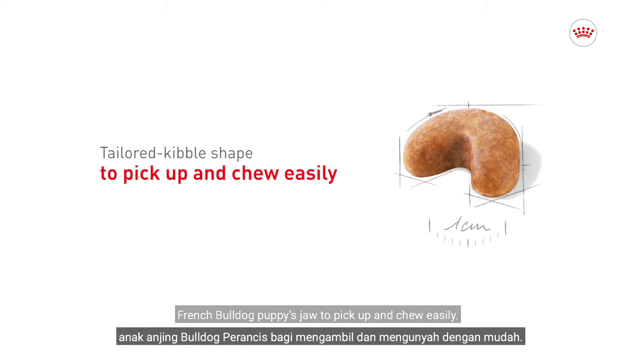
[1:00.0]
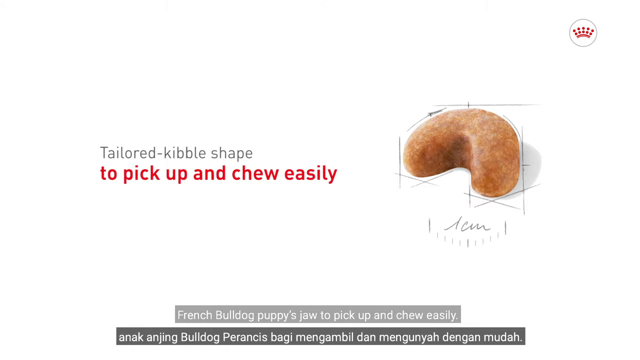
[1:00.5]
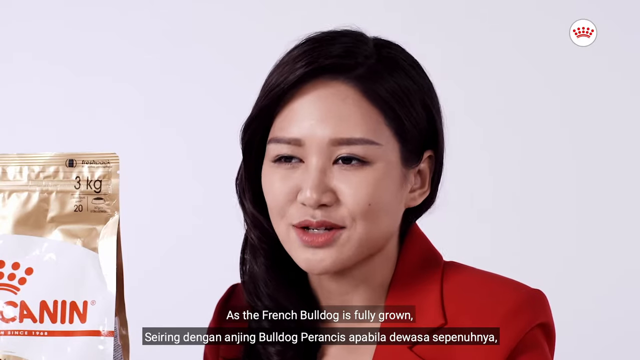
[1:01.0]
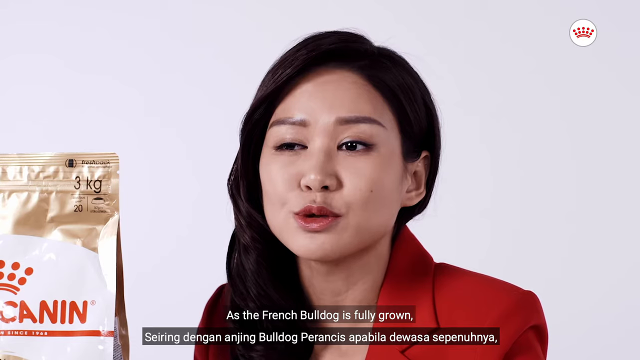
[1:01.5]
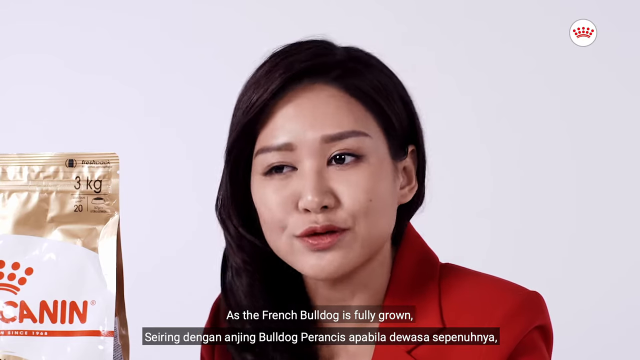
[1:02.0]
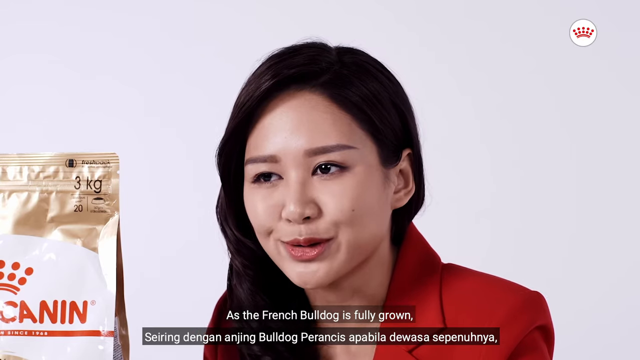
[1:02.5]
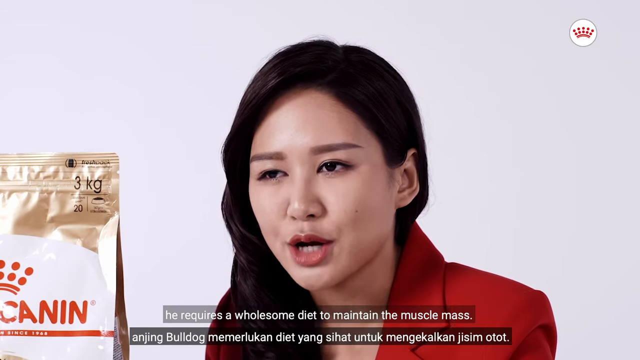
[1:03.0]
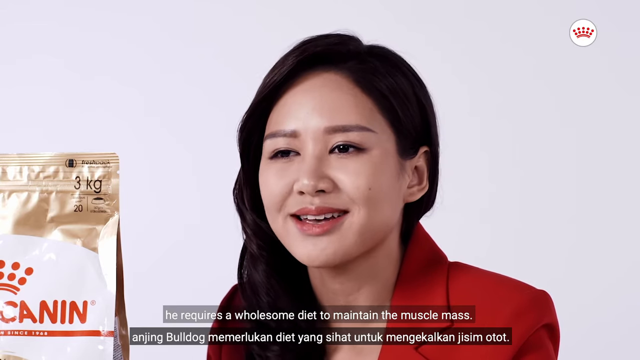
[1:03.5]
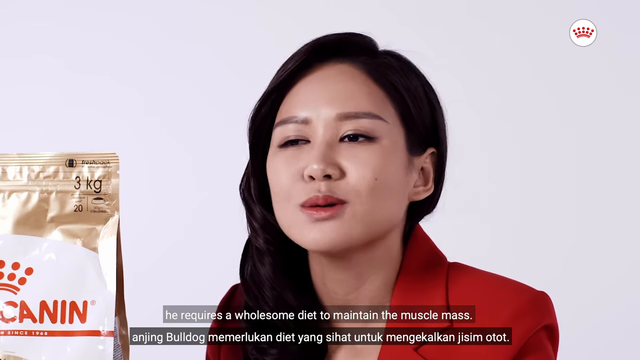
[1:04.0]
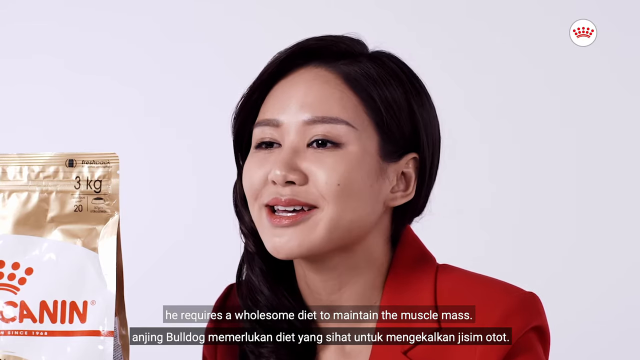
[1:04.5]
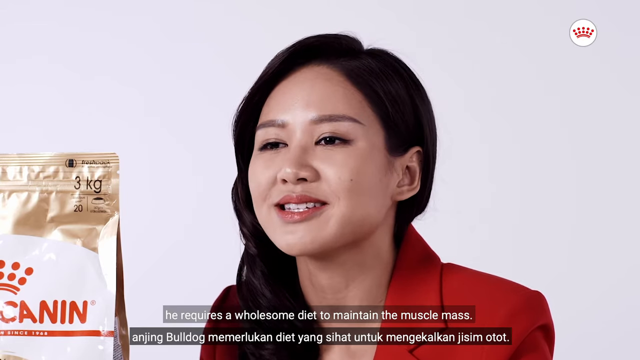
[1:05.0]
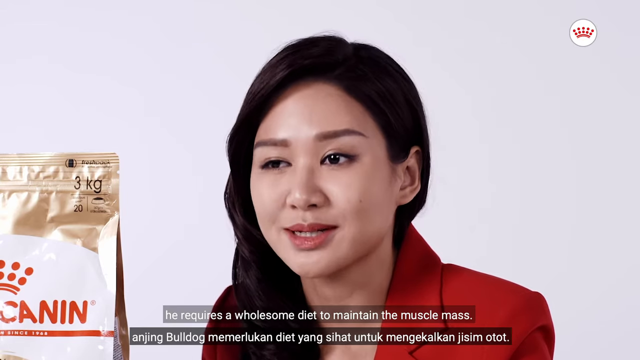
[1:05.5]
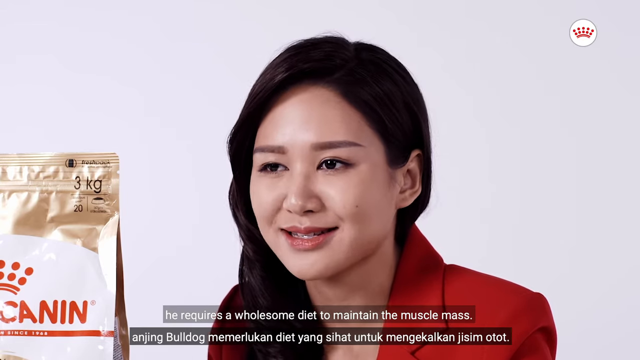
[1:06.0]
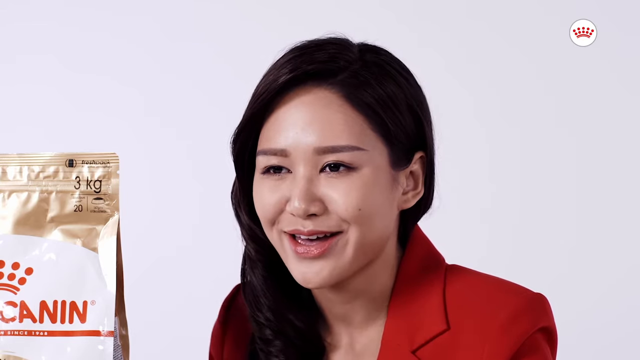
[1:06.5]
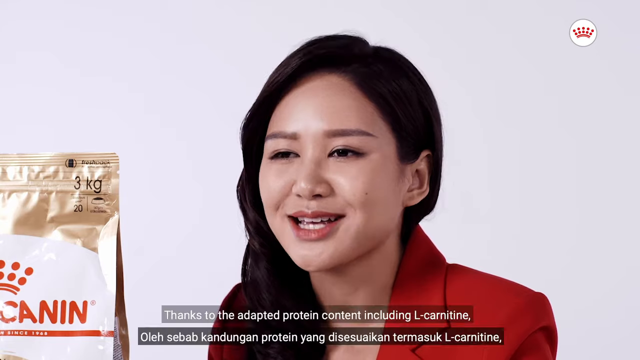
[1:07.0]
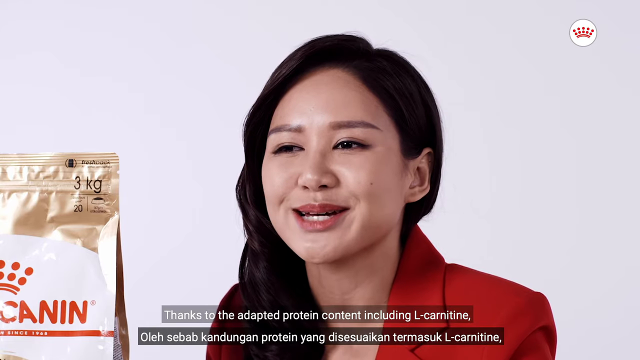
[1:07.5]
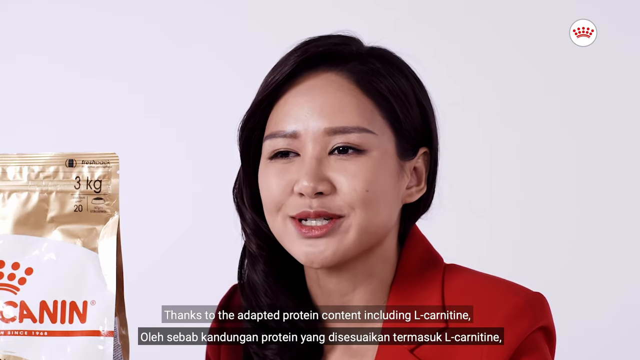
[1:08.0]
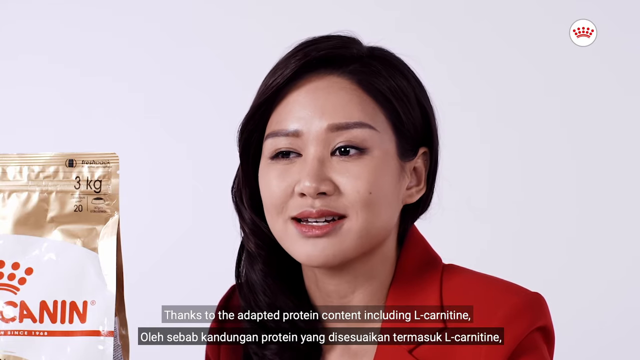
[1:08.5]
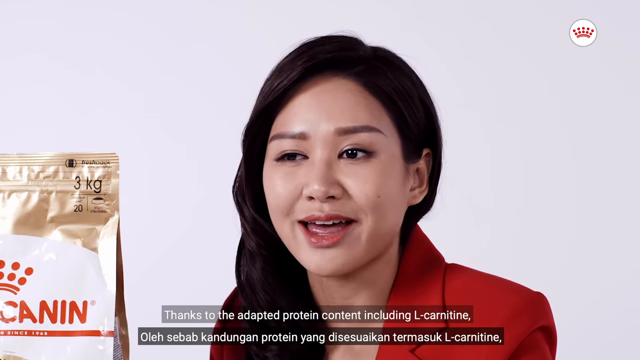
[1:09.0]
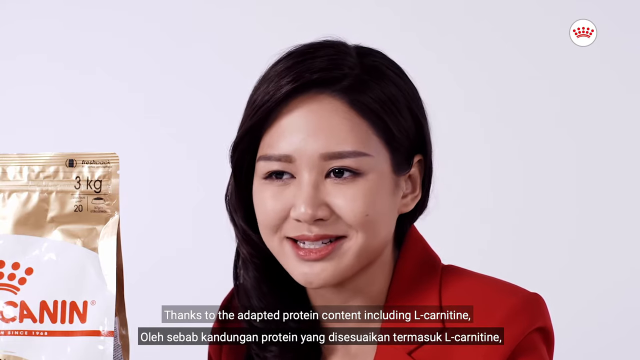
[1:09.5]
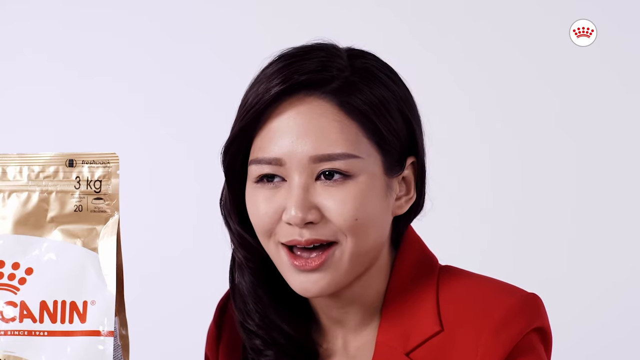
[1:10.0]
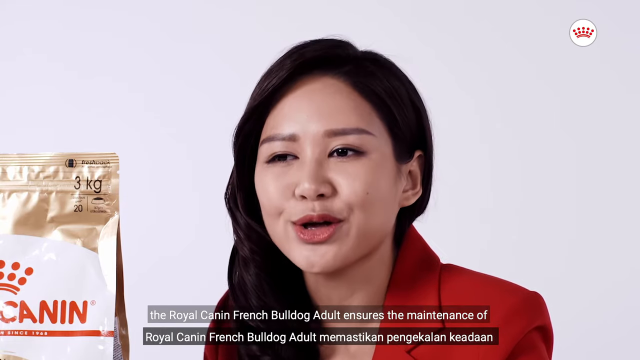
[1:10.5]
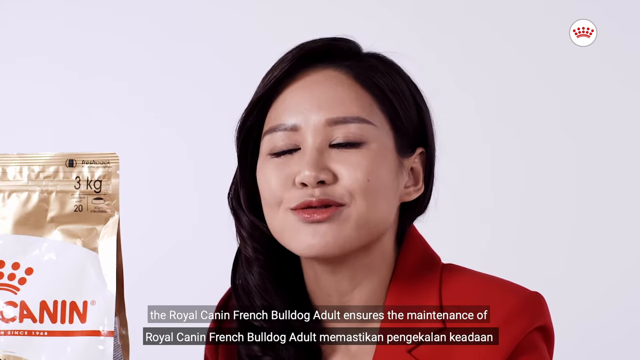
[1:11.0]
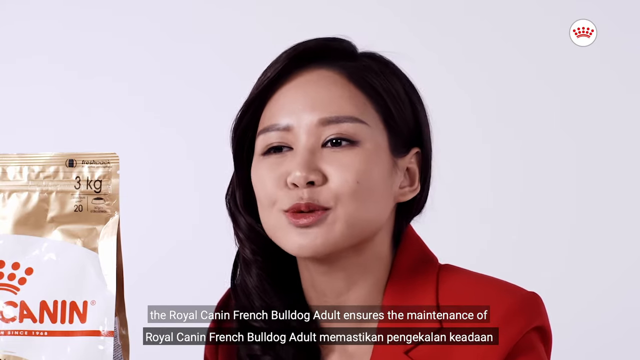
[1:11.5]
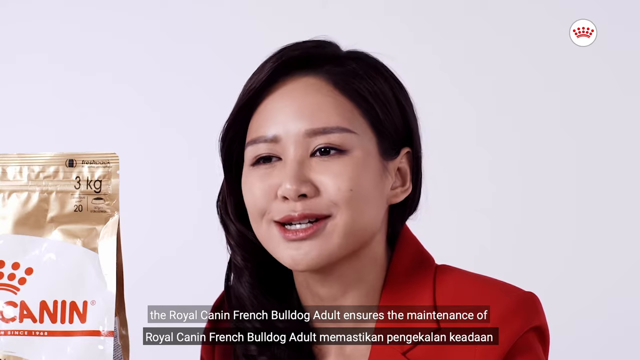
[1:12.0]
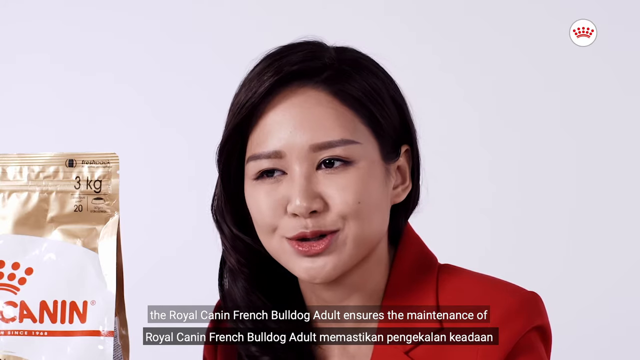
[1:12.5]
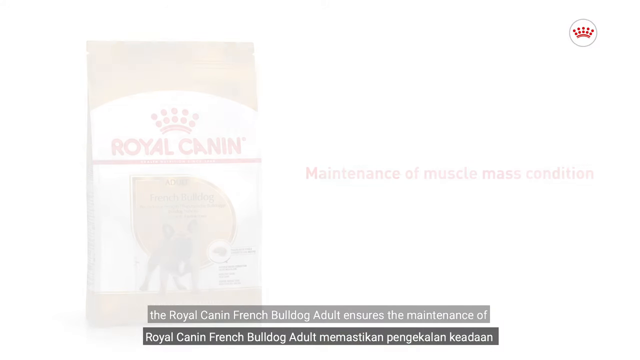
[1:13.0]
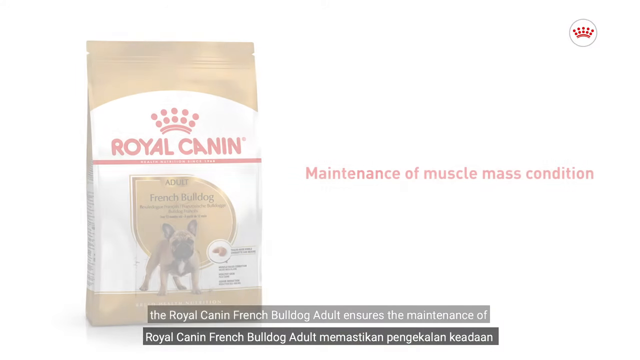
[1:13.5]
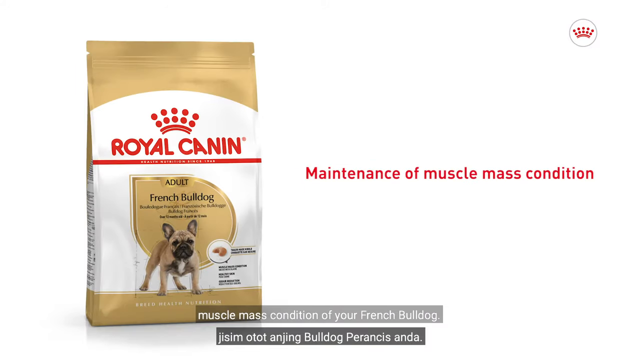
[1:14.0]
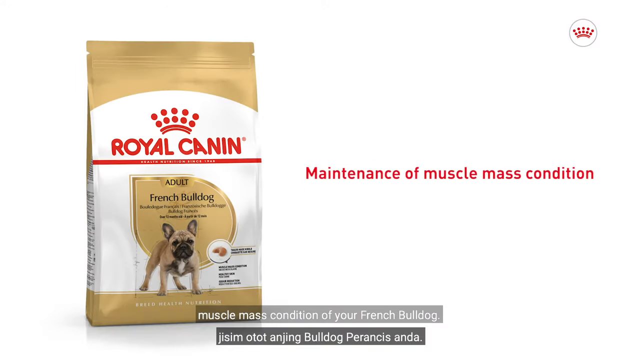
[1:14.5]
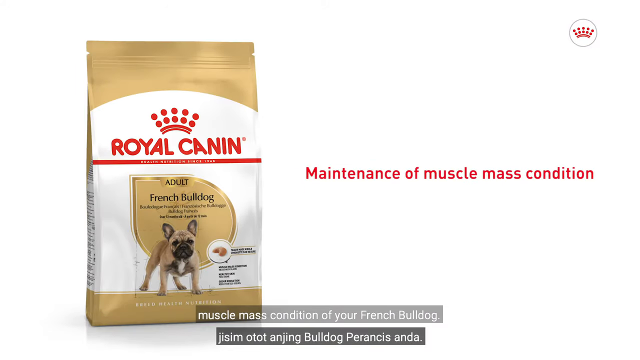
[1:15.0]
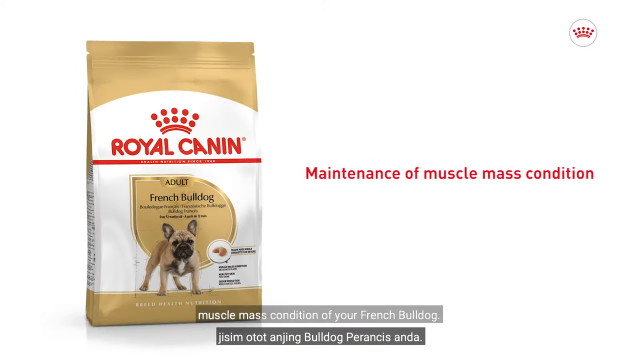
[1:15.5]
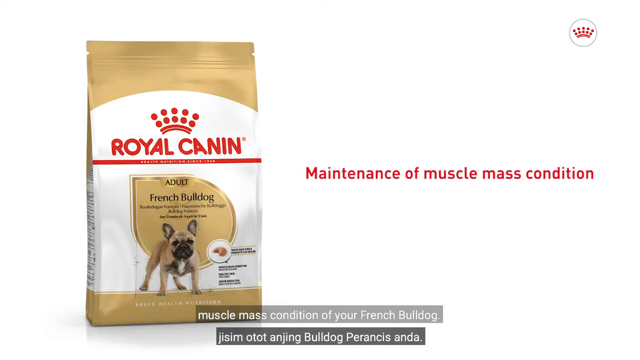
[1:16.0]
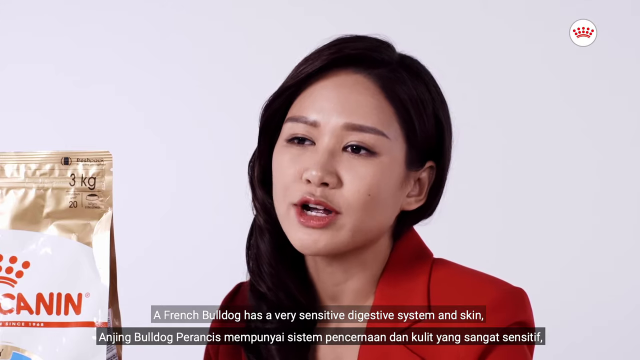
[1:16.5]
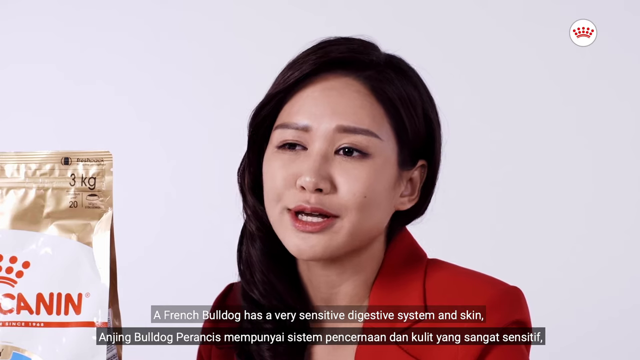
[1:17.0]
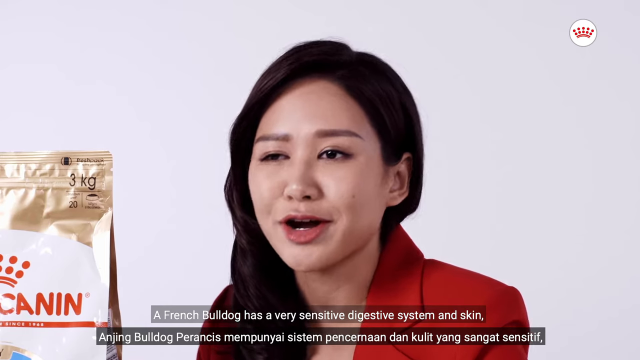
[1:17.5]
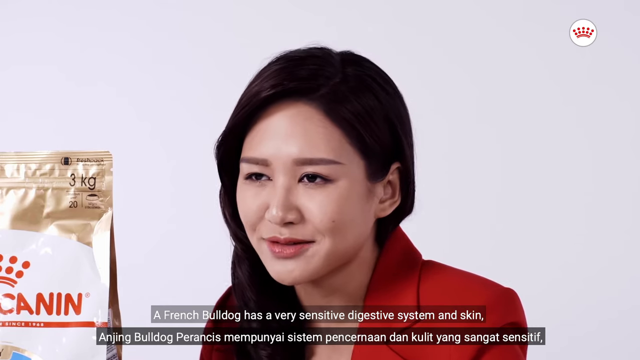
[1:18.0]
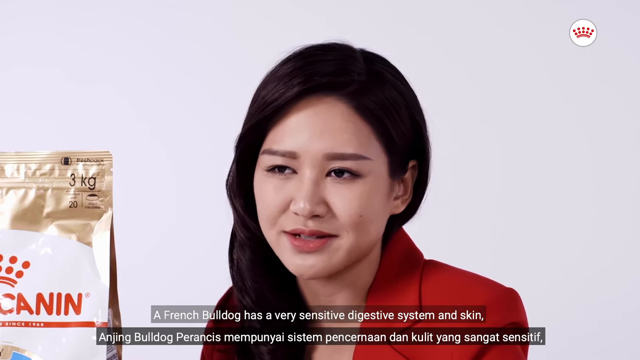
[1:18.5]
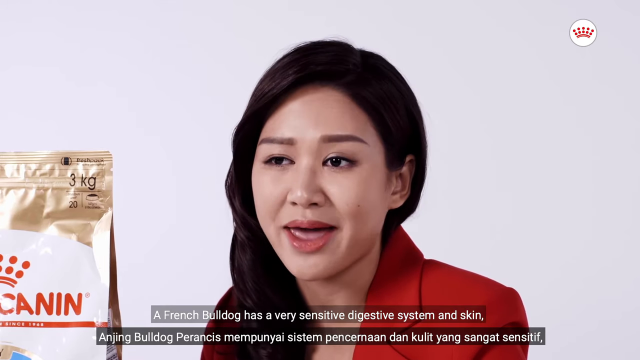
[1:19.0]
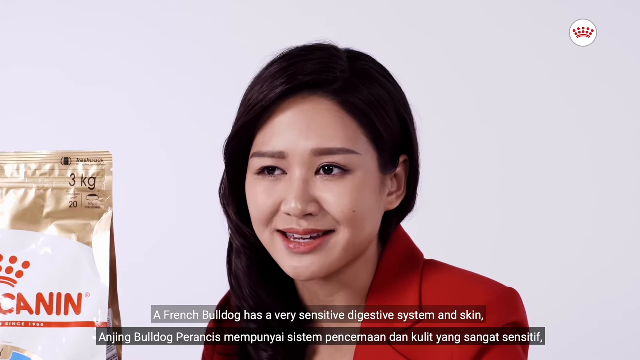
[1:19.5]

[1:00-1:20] A piece of kibble is shown on the right-hand side of the screen, with text on the left: "tailored kibble shape" in gray, and under it, in red, "to pick up and chew easily". The video switches back to the Asian woman, sitting down in a red suit jacket and speaking toward the camera. Her hair is brushed to one side, draping over her right shoulder. The dog food appears on the left of the screen again, with red text on the right that says "maintenance of muscle mass condition".